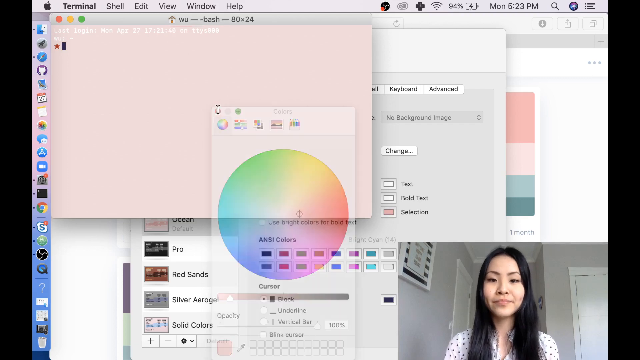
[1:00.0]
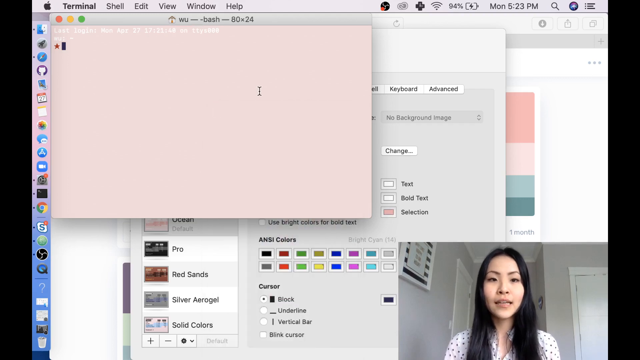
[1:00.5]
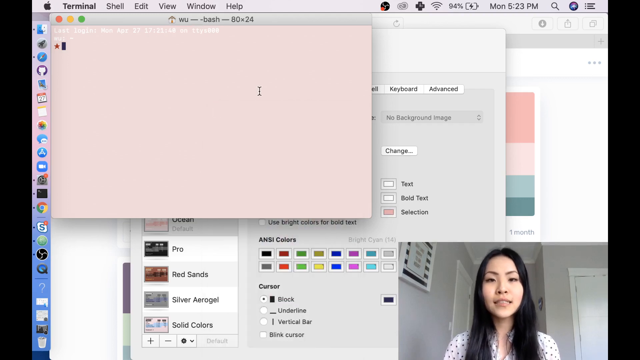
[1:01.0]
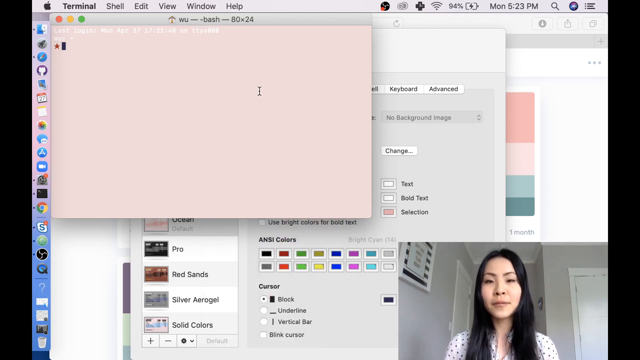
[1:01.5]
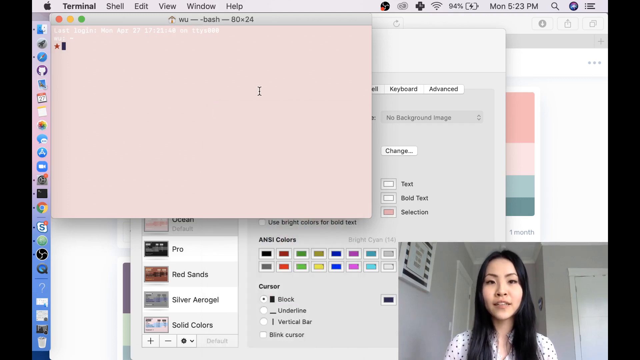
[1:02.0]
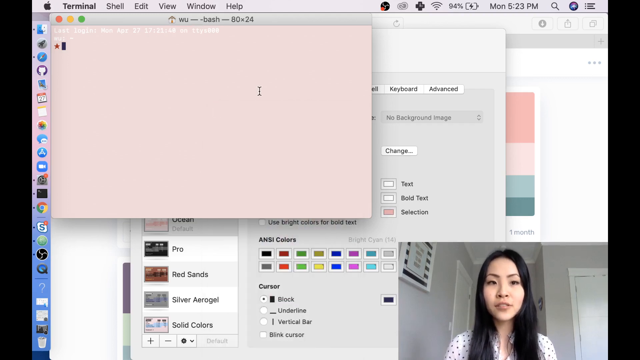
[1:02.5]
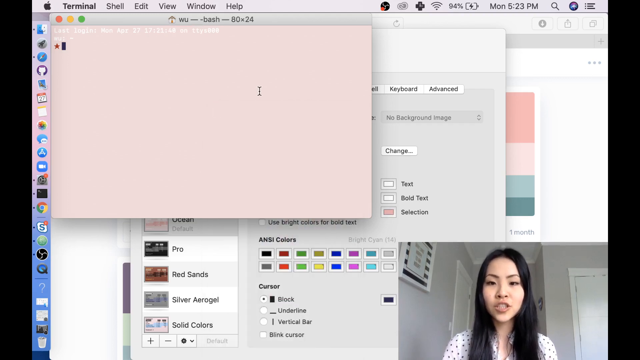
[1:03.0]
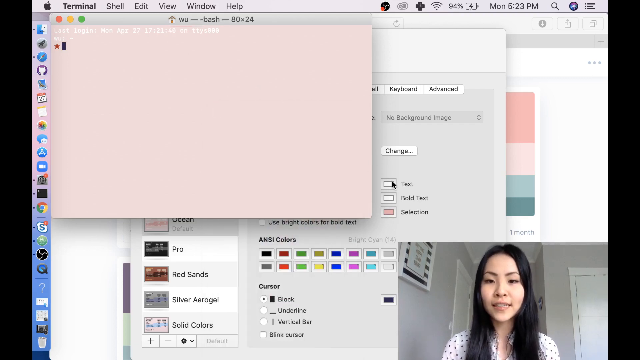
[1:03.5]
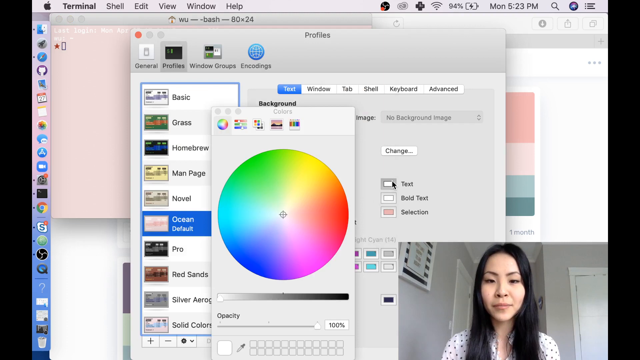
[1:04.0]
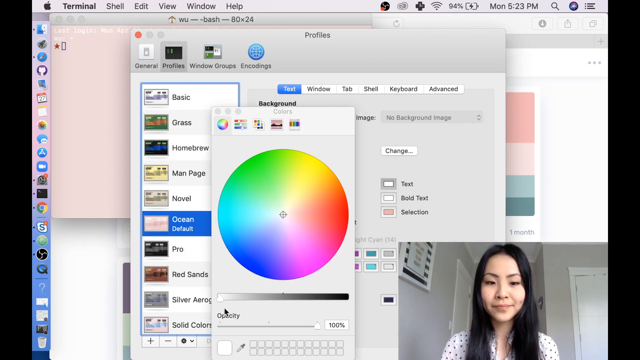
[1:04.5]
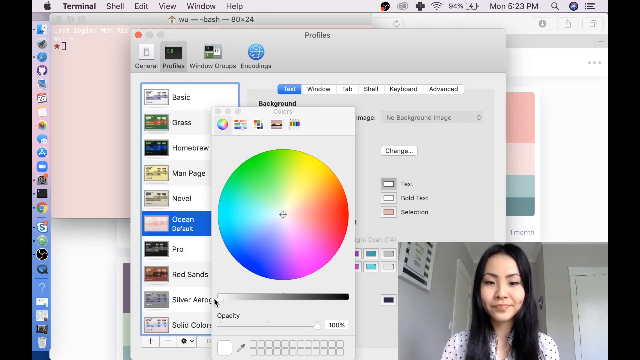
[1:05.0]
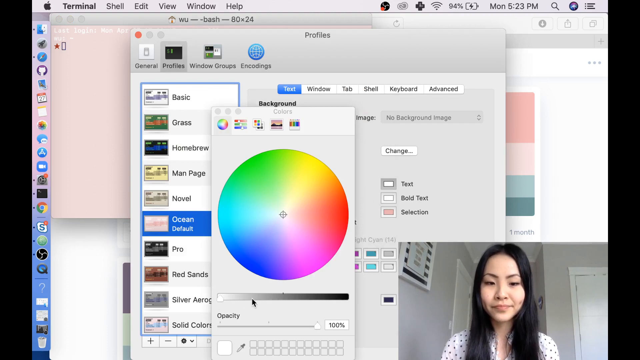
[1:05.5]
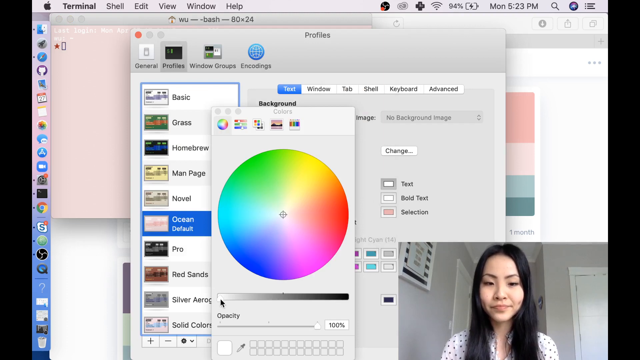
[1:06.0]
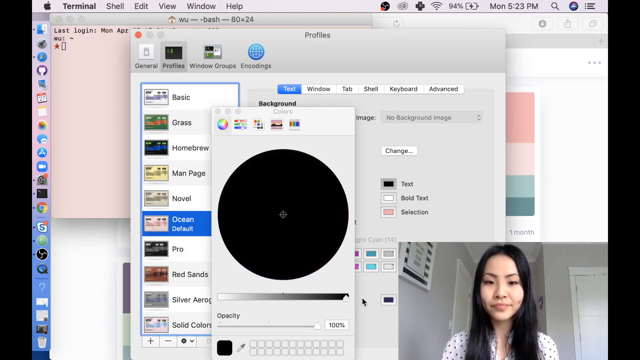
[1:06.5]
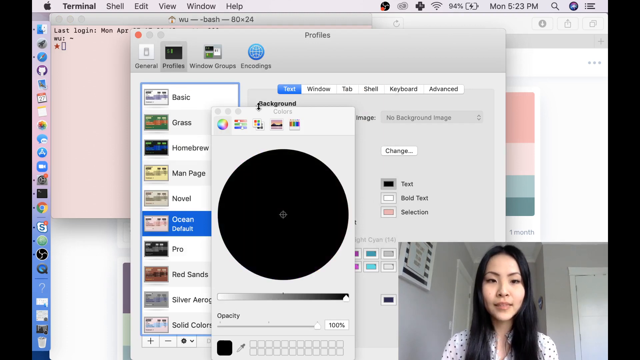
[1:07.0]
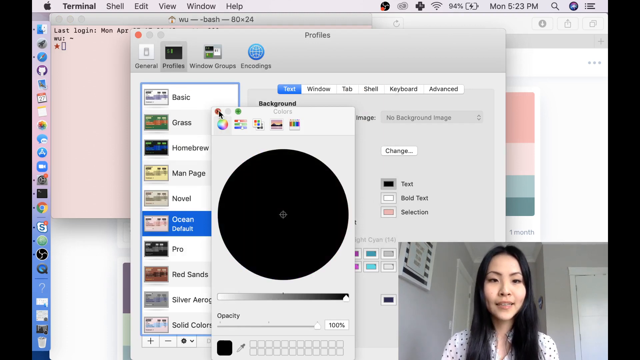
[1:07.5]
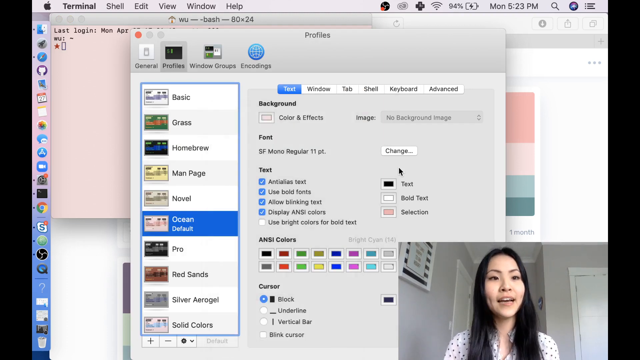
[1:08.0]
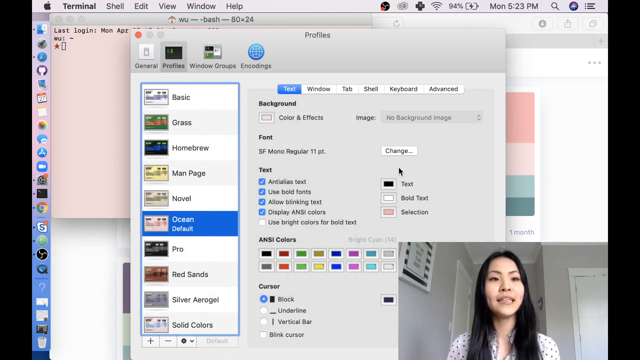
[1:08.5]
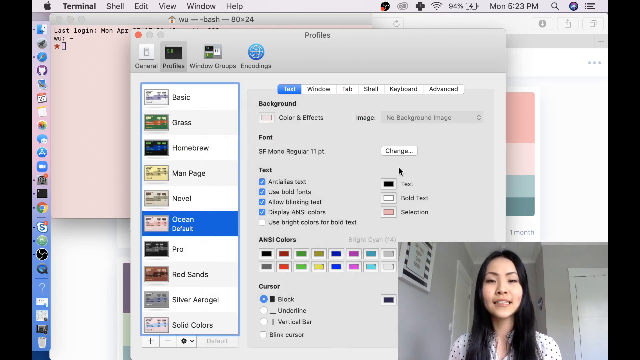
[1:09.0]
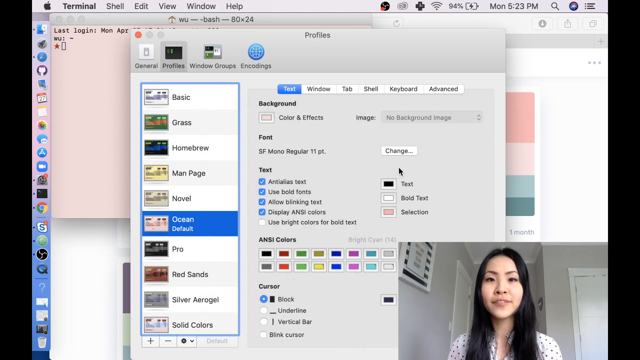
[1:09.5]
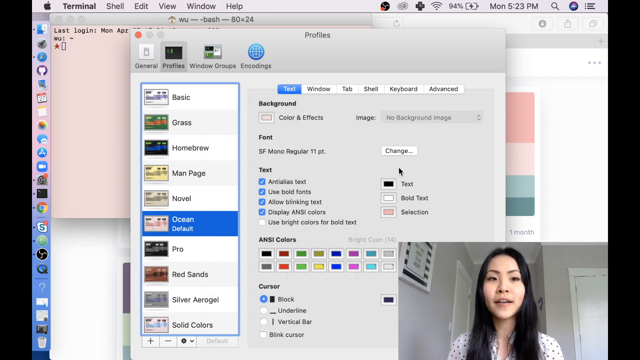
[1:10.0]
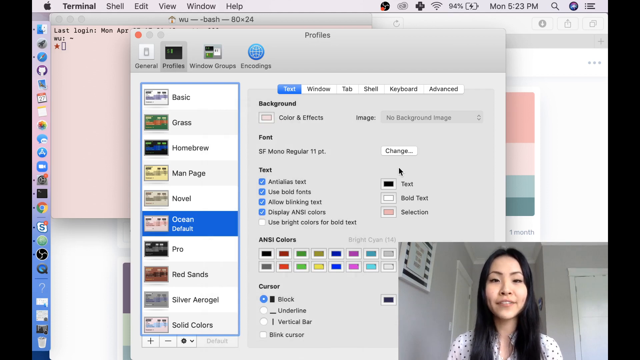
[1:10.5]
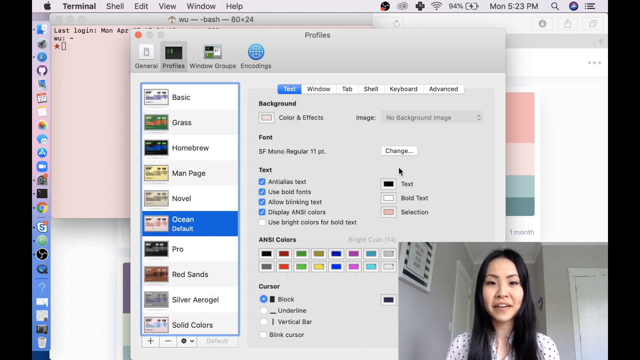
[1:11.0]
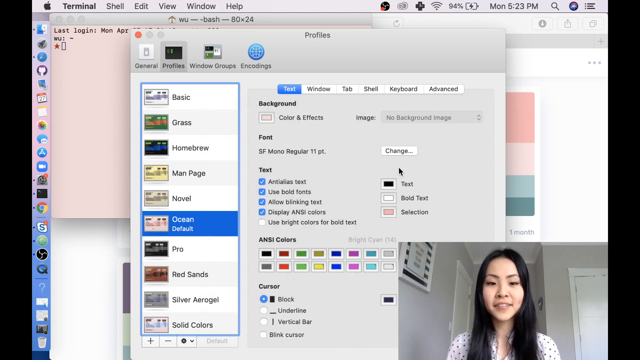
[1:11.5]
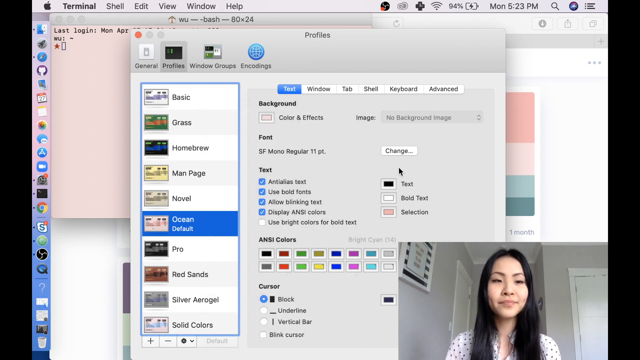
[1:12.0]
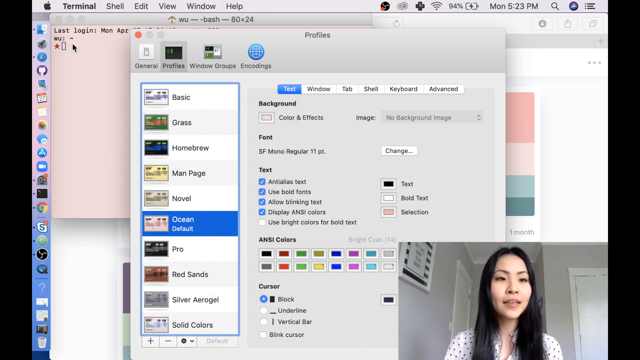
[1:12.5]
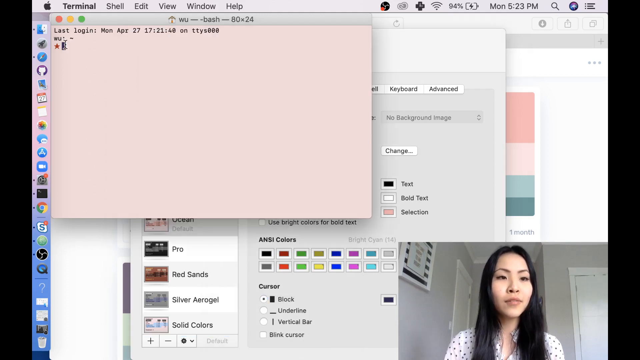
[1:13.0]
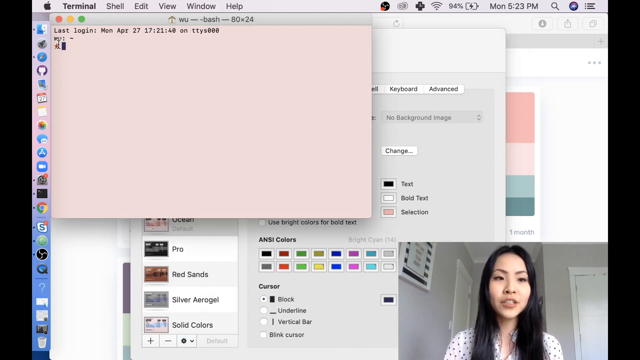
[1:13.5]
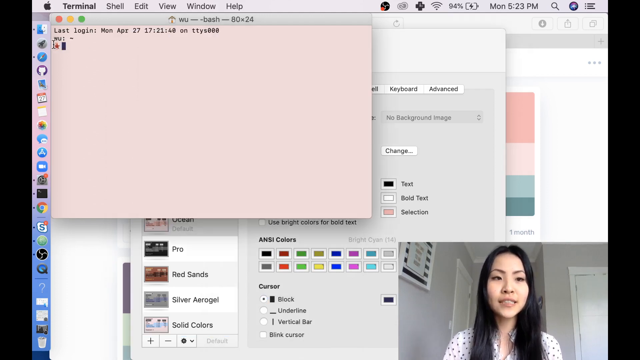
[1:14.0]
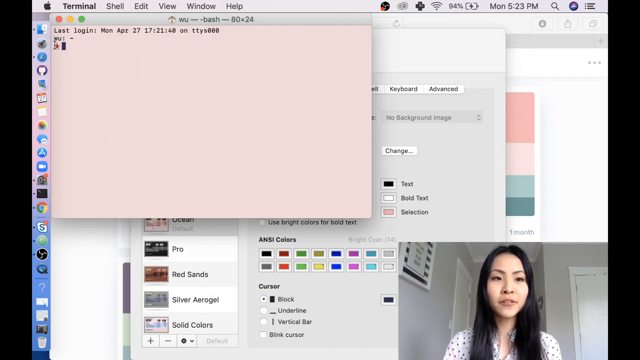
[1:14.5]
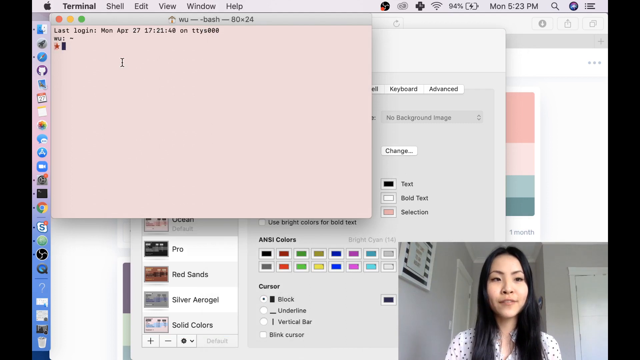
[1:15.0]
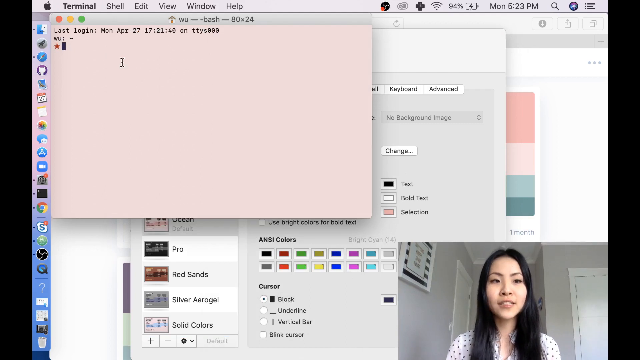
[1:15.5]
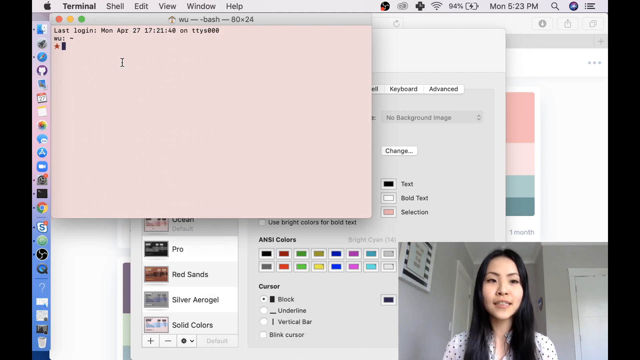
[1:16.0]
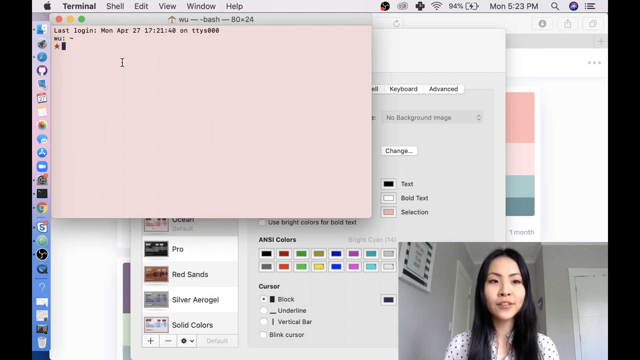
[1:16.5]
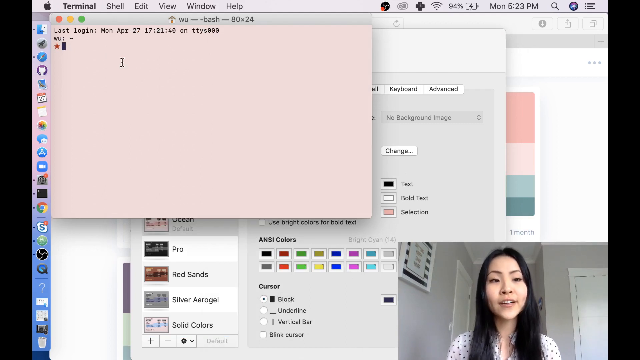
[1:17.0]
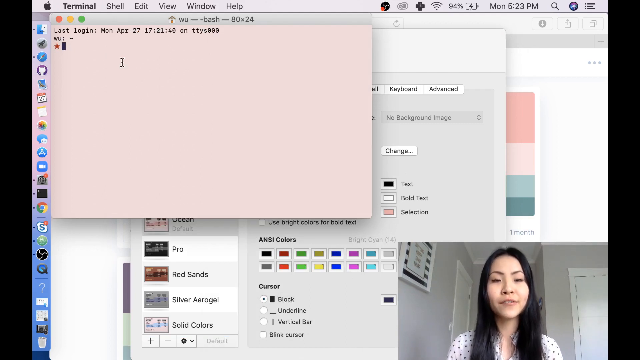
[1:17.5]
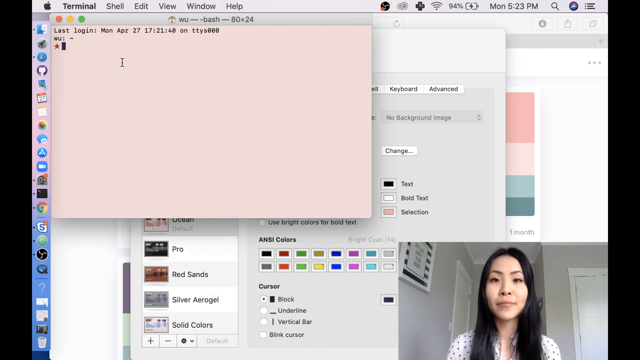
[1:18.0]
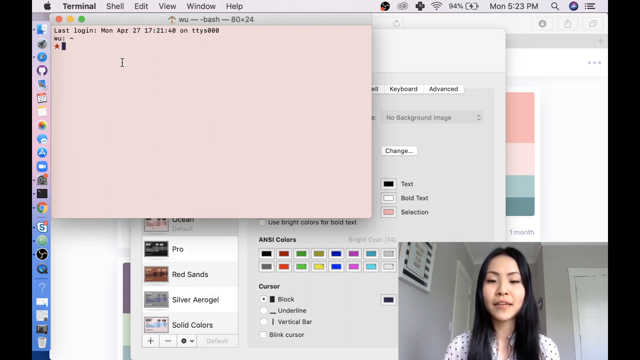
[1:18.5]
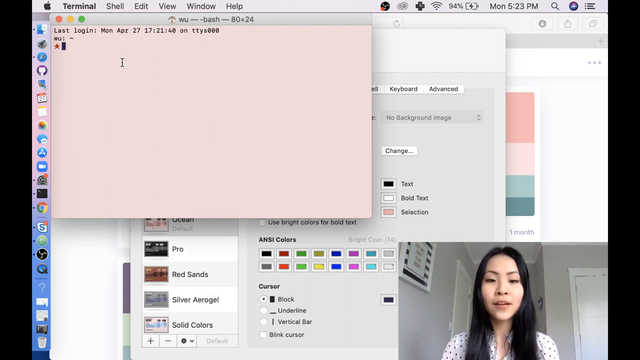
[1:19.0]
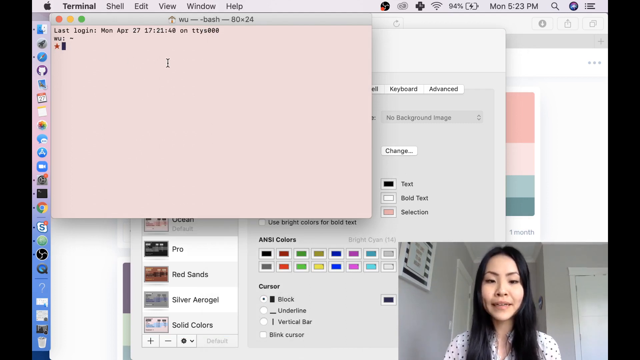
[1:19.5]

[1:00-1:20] A woman is in the bottom right-hand section of the screen. A separate code box in the top left-hand section of the screen shows code. A color wheel displays many different colors, and the Asian woman chooses sections of the color wheel.